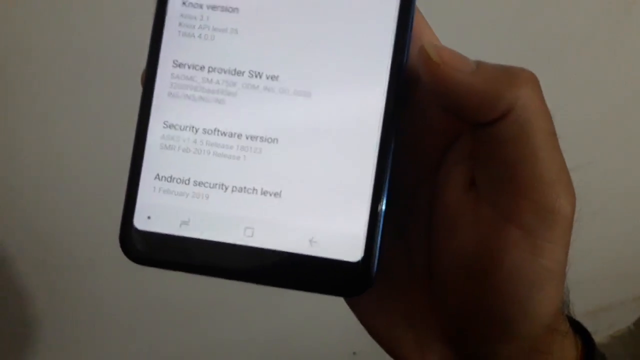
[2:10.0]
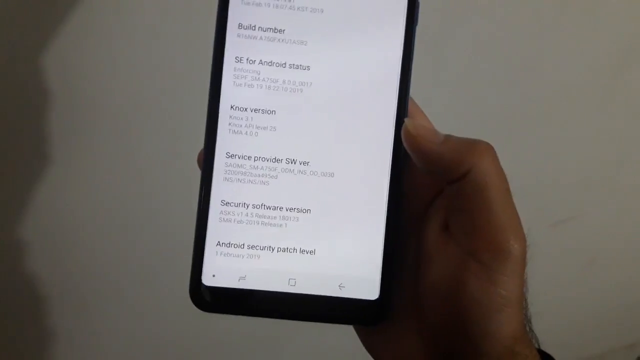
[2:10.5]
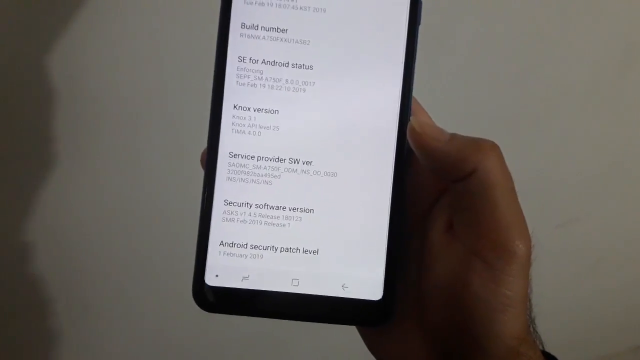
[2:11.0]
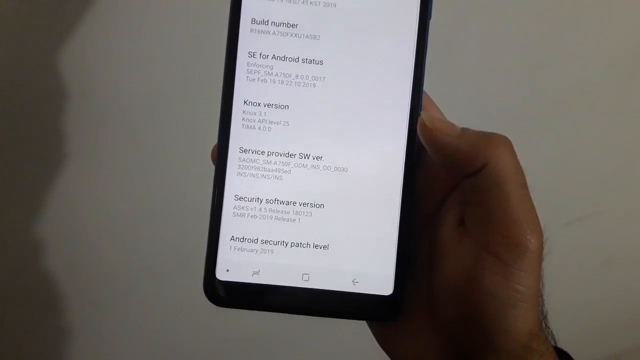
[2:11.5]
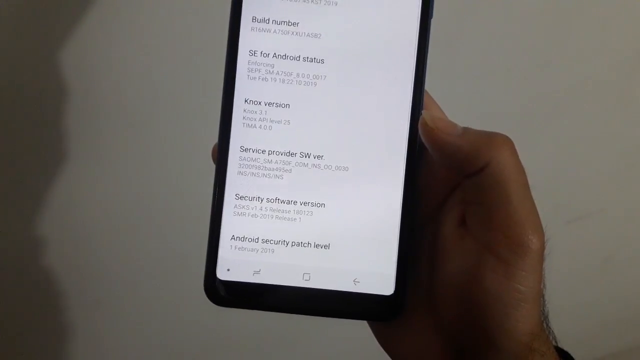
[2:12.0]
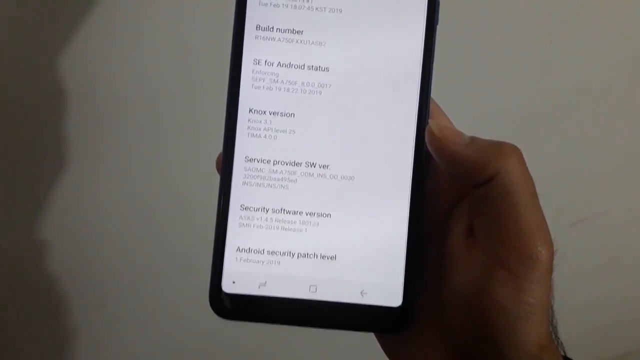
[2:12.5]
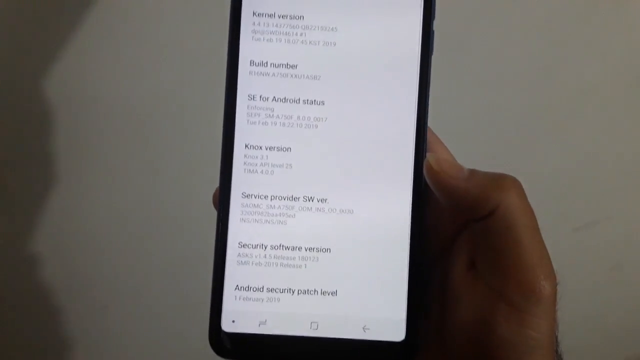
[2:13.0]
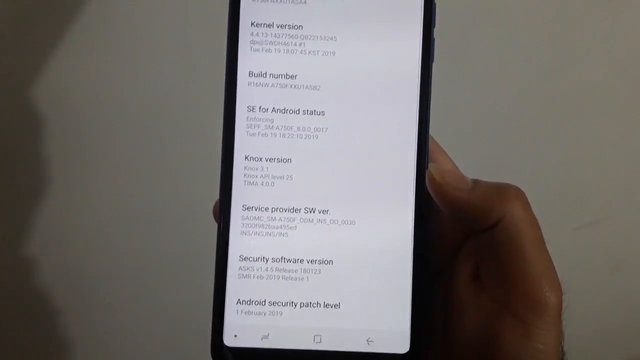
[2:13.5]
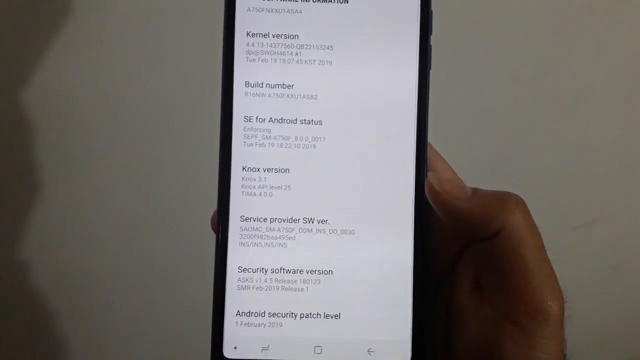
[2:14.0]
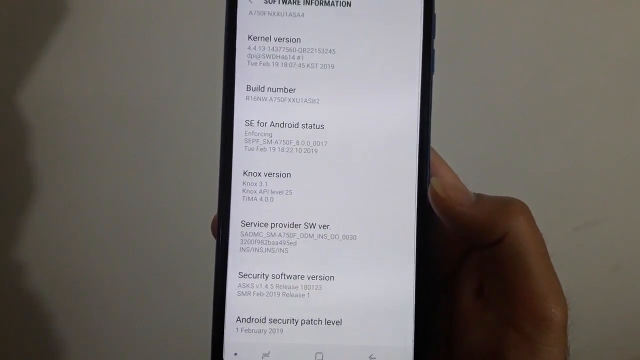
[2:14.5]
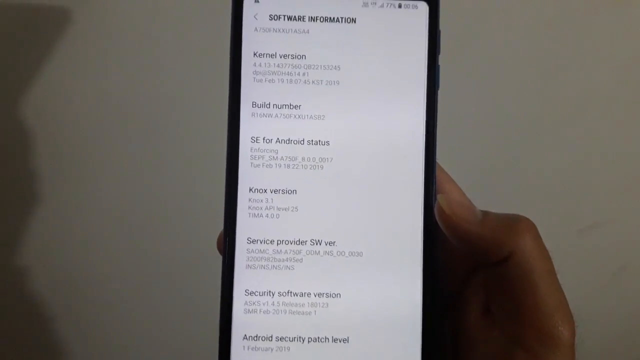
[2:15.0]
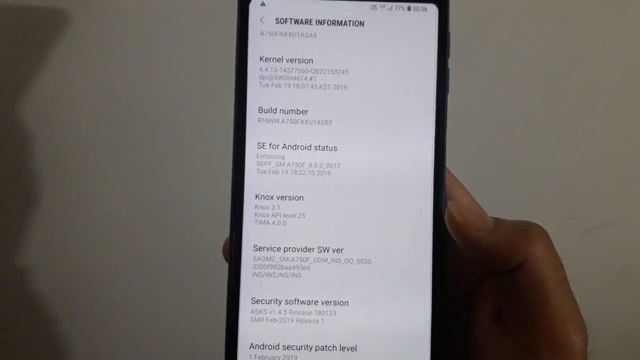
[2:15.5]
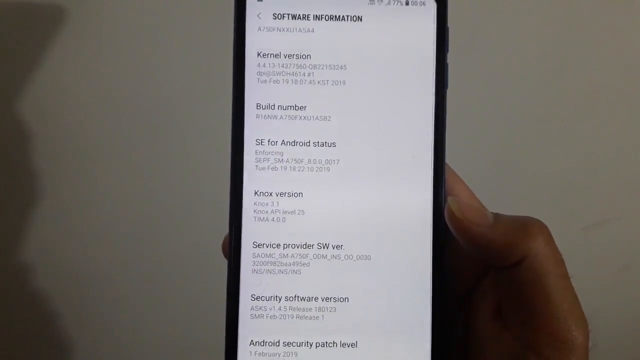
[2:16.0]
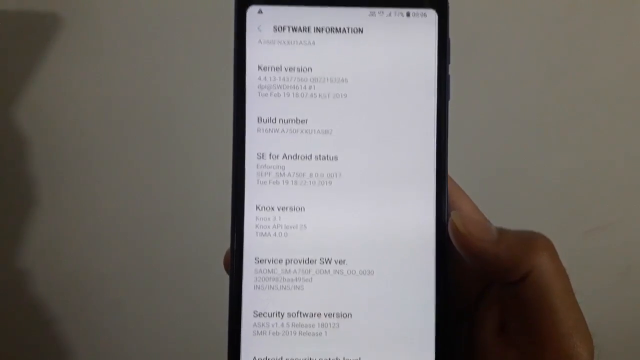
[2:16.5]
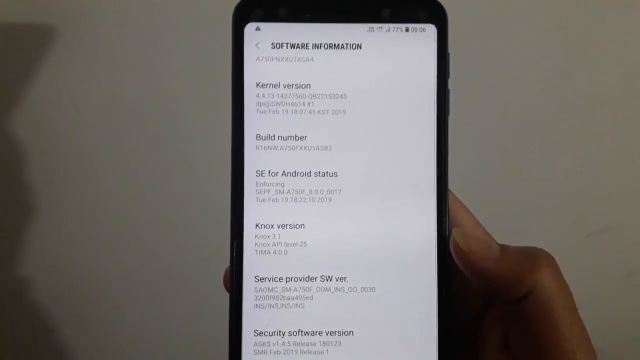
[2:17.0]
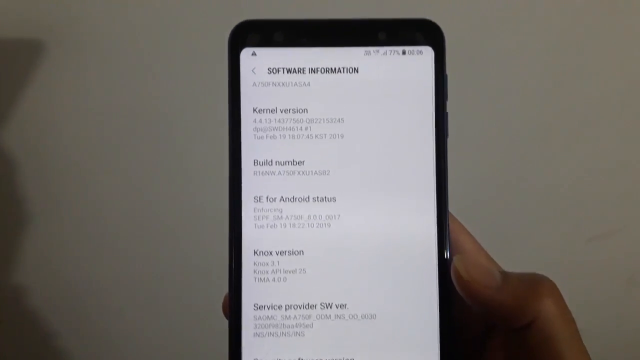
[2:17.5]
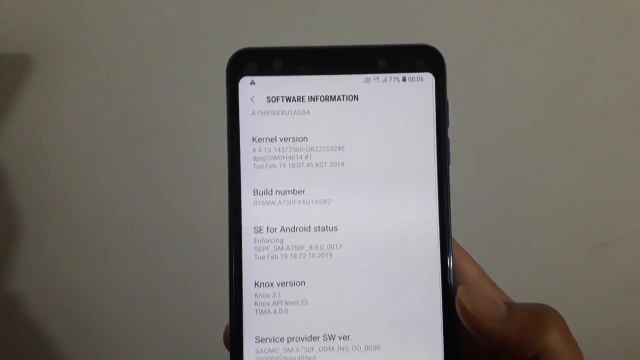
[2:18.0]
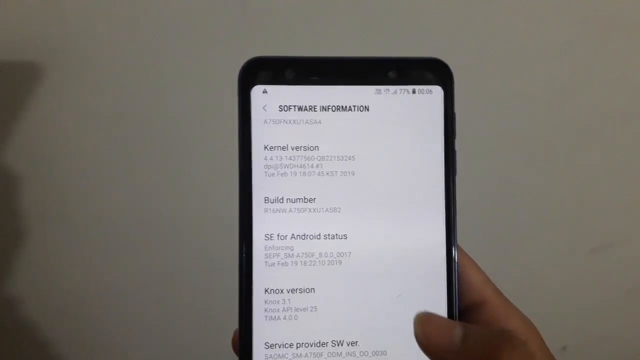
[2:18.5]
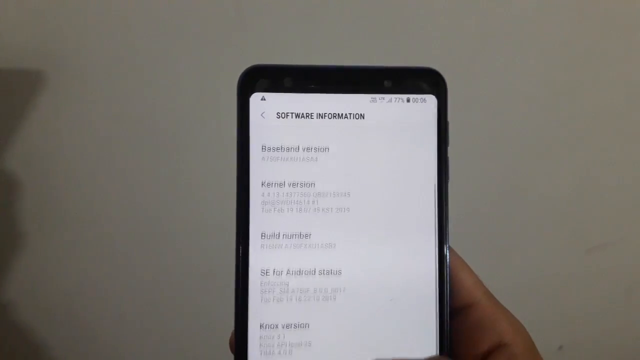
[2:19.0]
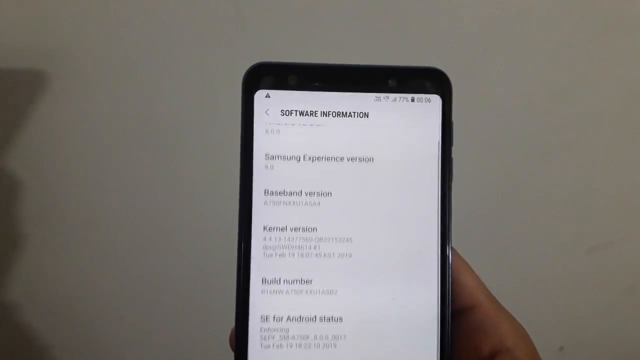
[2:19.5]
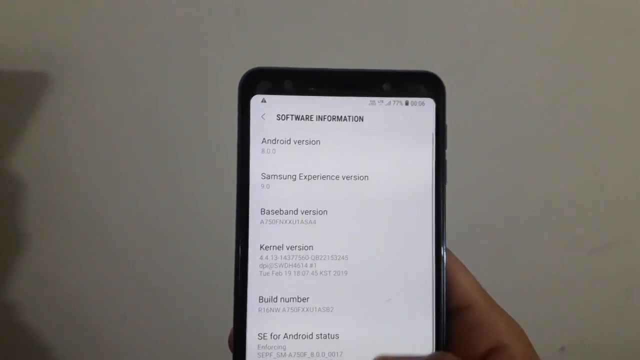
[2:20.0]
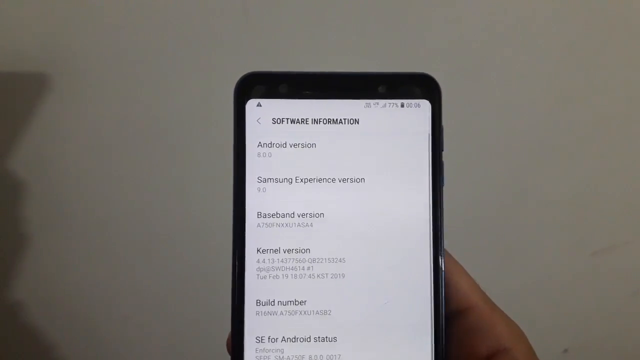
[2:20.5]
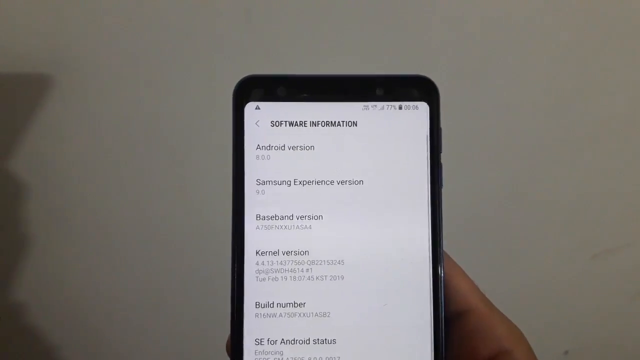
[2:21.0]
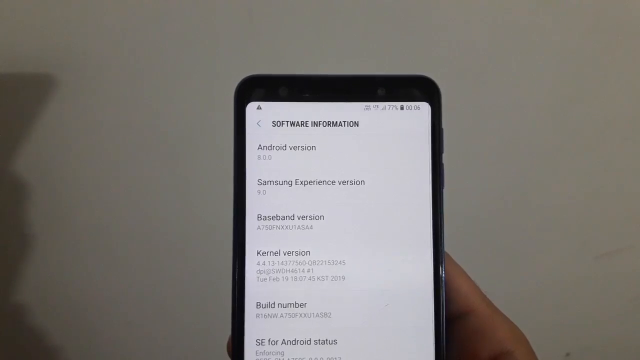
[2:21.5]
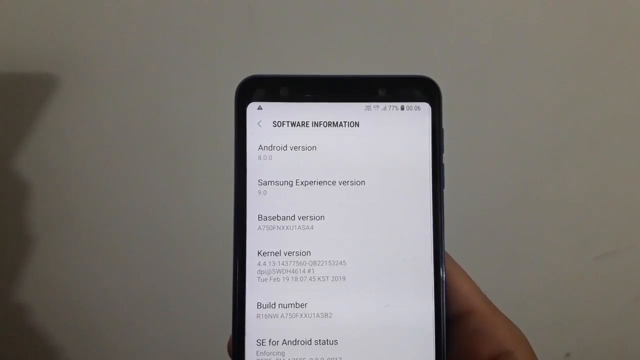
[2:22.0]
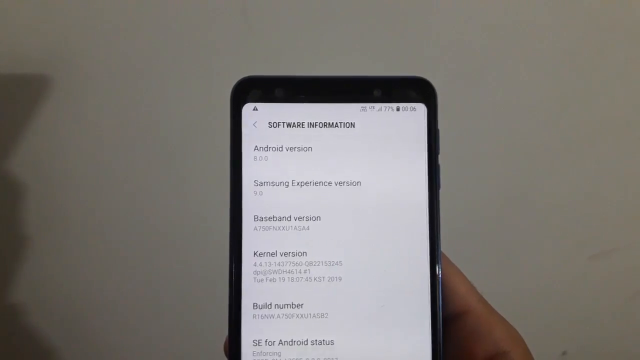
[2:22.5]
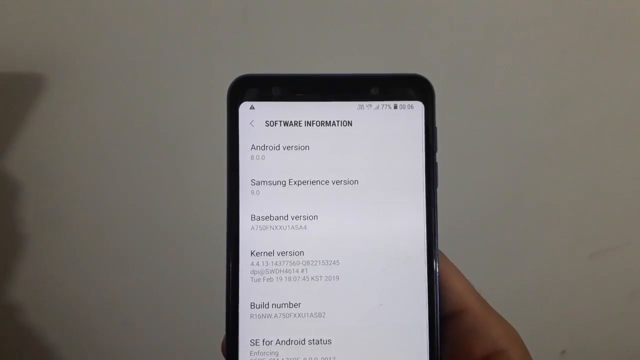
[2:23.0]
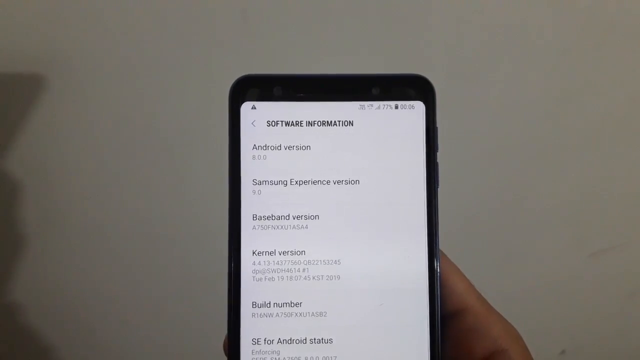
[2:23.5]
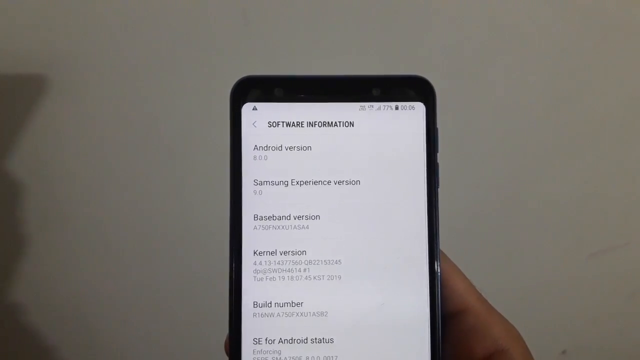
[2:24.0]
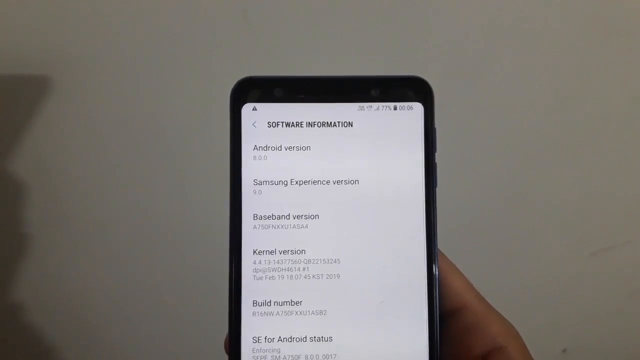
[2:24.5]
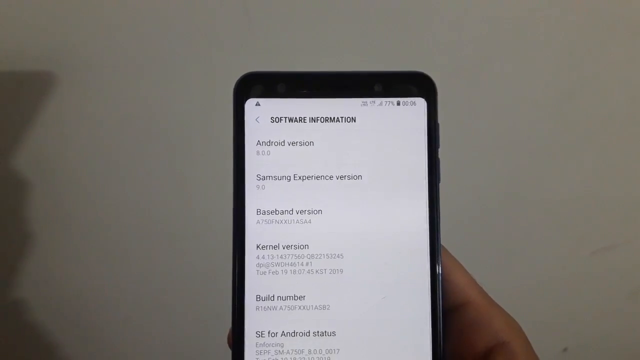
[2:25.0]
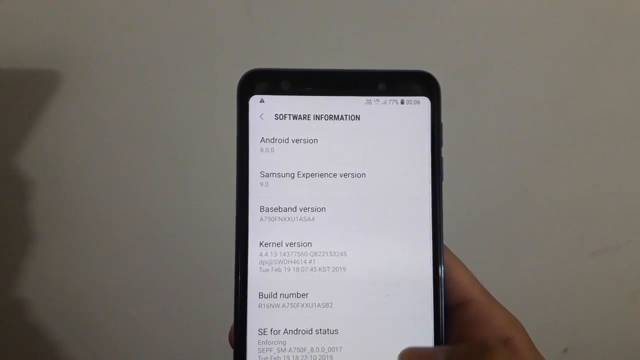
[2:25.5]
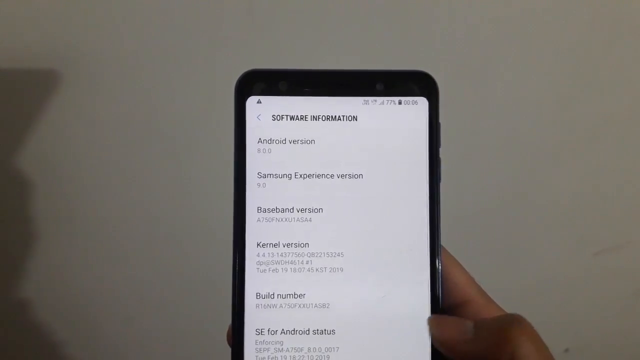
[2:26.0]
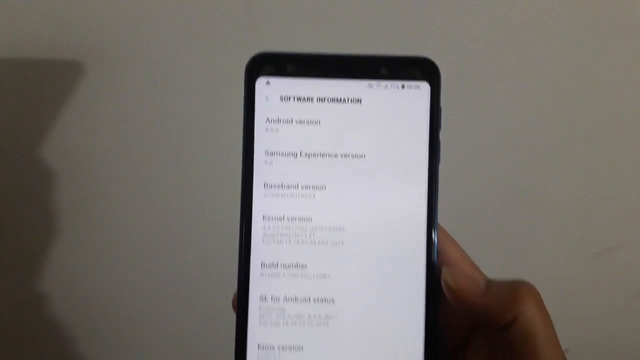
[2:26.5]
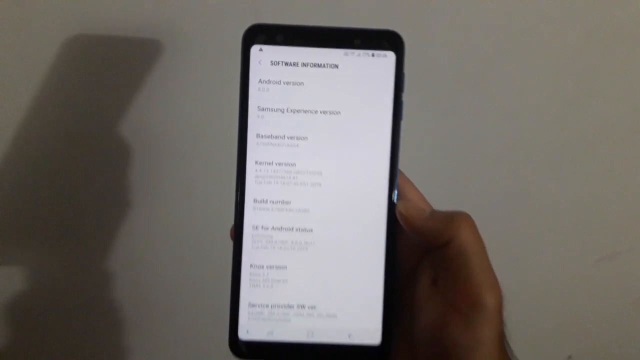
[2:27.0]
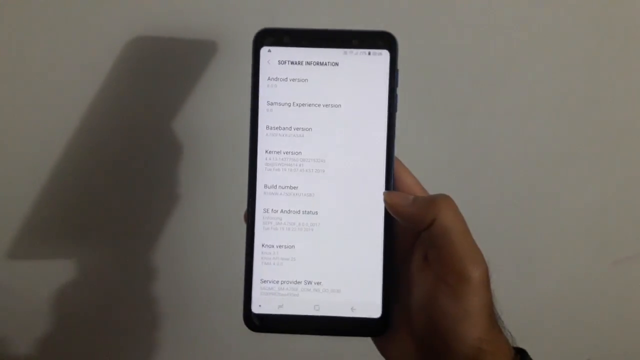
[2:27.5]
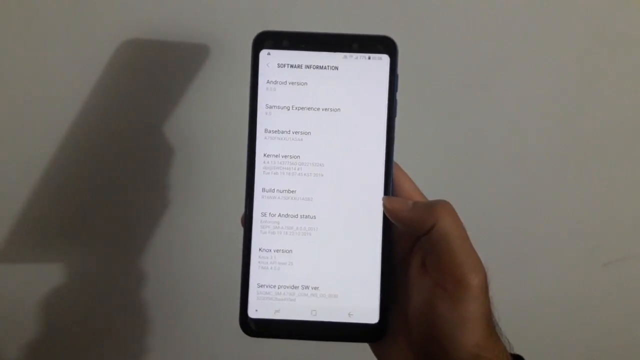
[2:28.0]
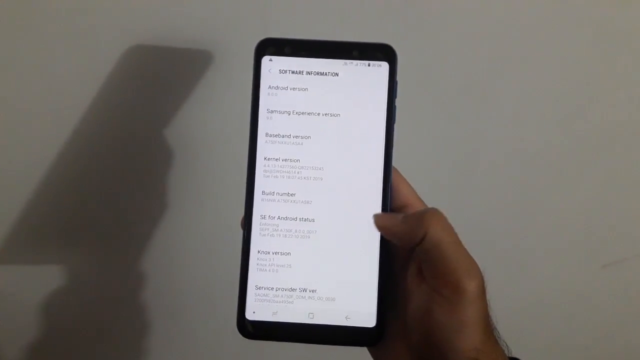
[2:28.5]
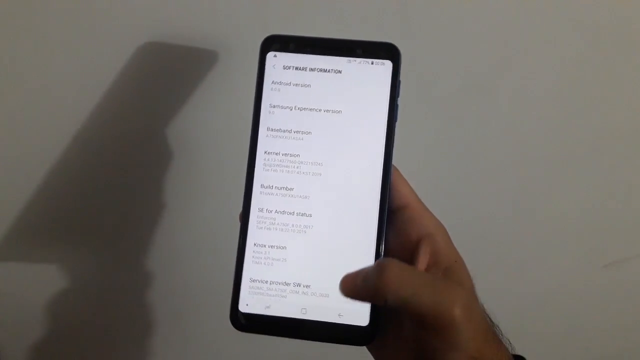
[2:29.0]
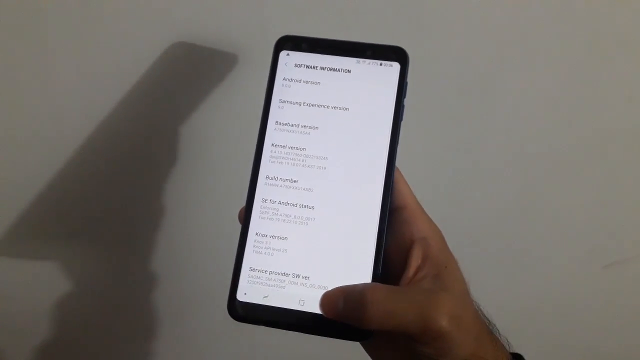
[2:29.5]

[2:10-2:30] A woman holds a Samsung phone at close range so the screen can be seen, gripping it between her fingers and right thumb with her right hand. The phone casts a shadow on her wall. The top of the screen says "software information." She scrolls the page to show what is above, and "Android" appears at the very top. She scrolls very slowly through the information. "Samsung experience" is the second choice down. The page is white with black lettering. She has darker skin, and her walls are about a gray, maybe a dark beige color.